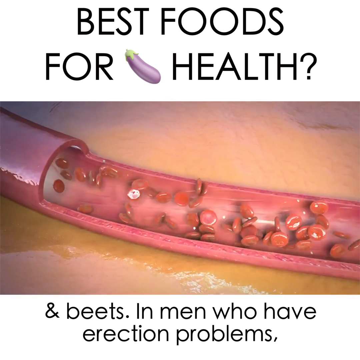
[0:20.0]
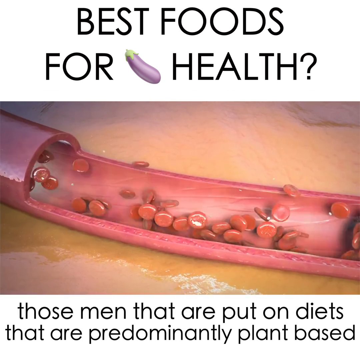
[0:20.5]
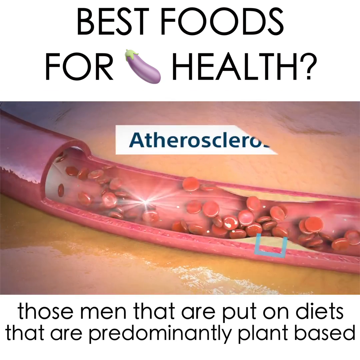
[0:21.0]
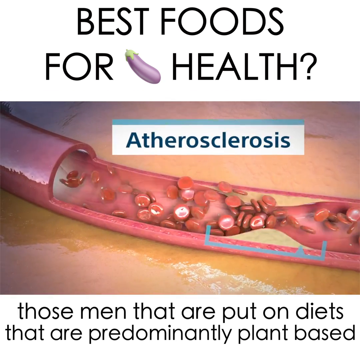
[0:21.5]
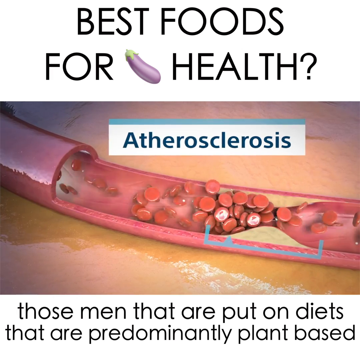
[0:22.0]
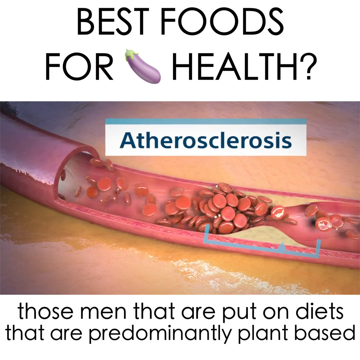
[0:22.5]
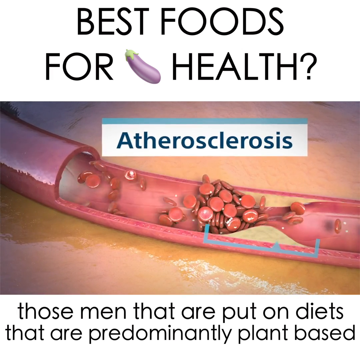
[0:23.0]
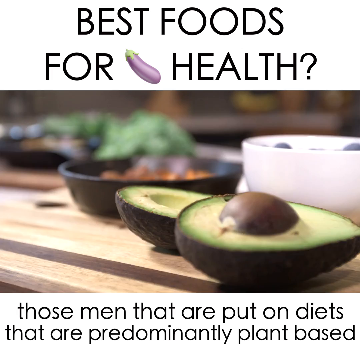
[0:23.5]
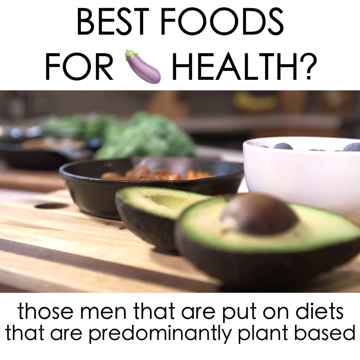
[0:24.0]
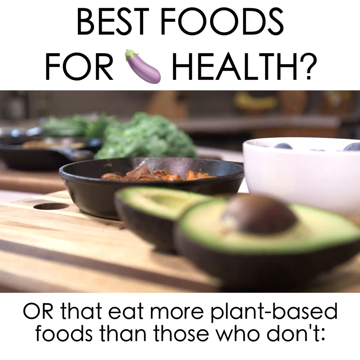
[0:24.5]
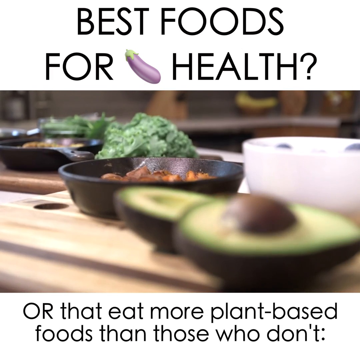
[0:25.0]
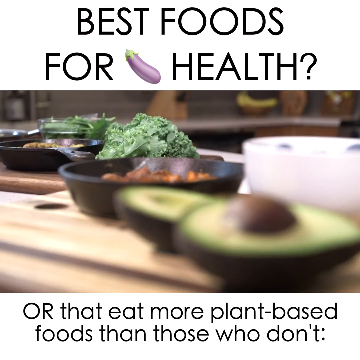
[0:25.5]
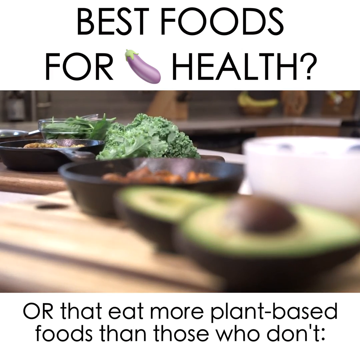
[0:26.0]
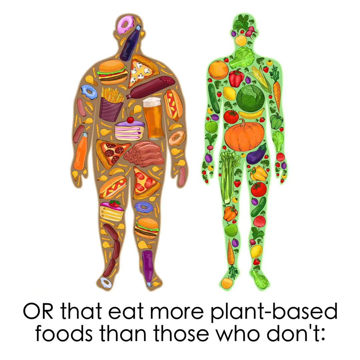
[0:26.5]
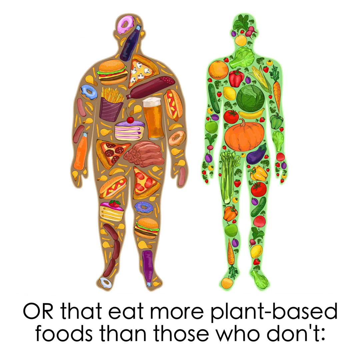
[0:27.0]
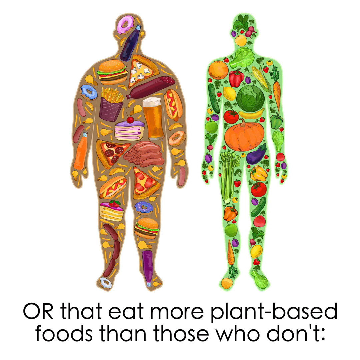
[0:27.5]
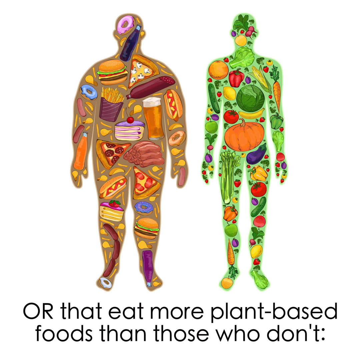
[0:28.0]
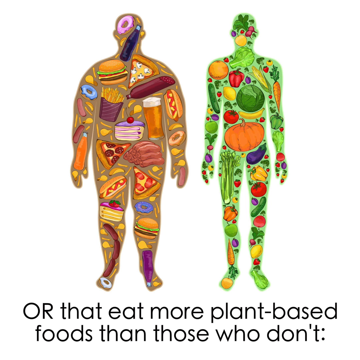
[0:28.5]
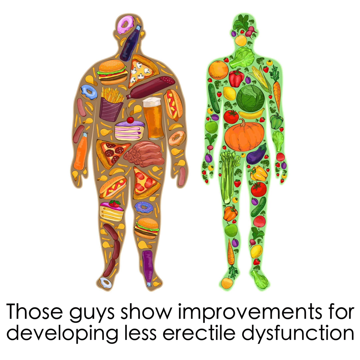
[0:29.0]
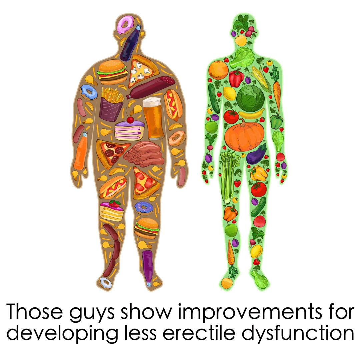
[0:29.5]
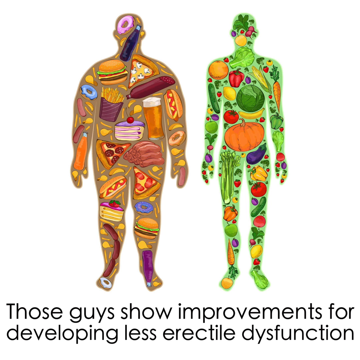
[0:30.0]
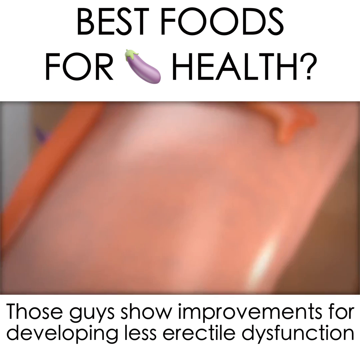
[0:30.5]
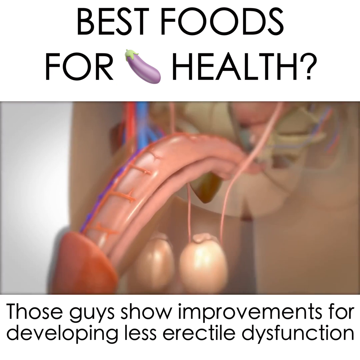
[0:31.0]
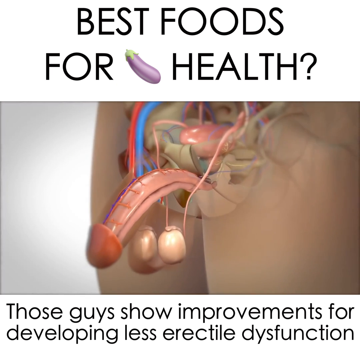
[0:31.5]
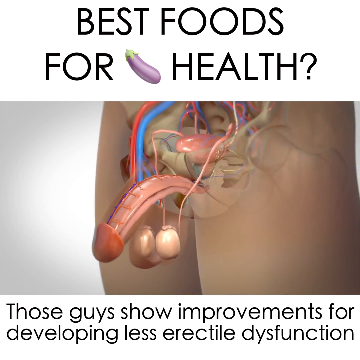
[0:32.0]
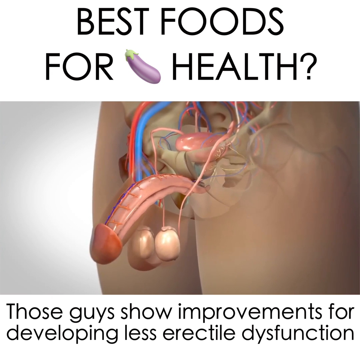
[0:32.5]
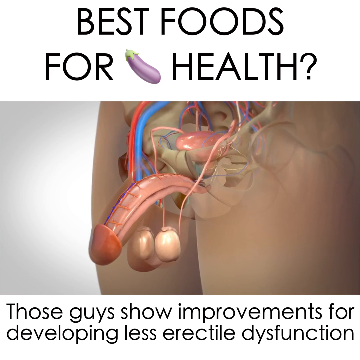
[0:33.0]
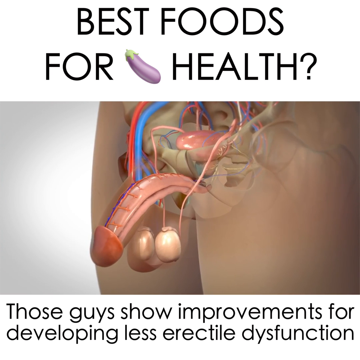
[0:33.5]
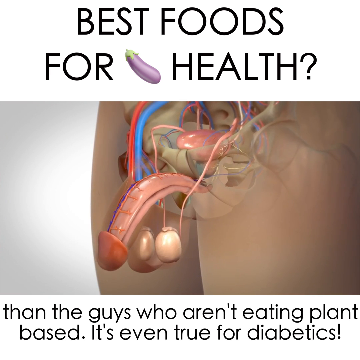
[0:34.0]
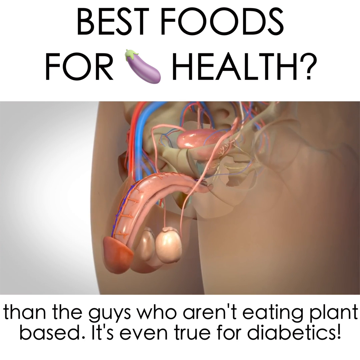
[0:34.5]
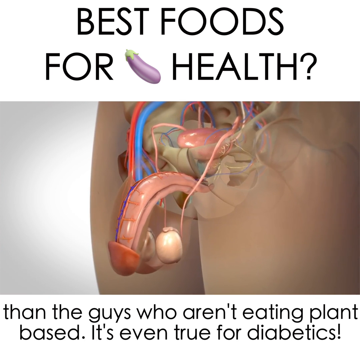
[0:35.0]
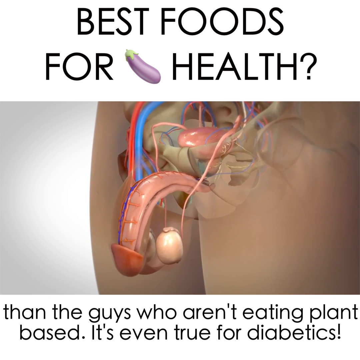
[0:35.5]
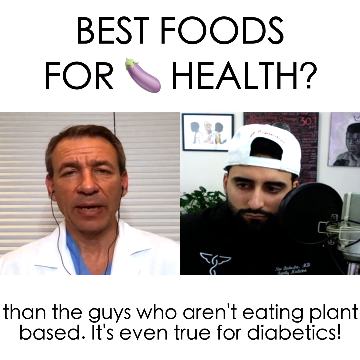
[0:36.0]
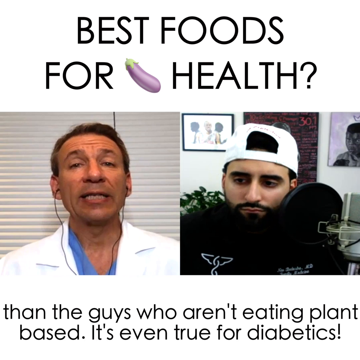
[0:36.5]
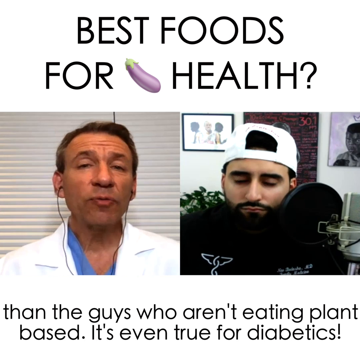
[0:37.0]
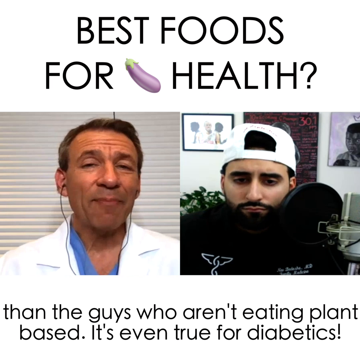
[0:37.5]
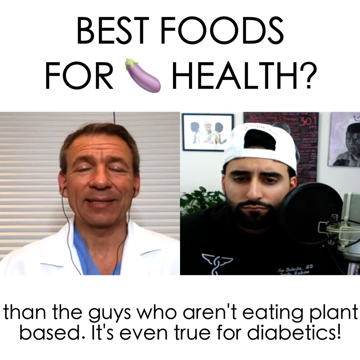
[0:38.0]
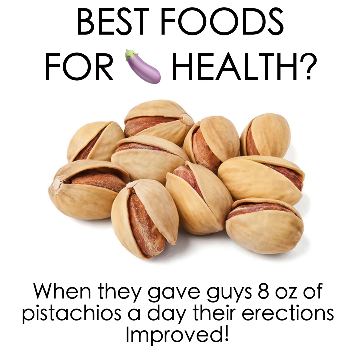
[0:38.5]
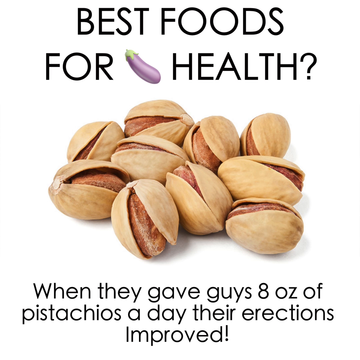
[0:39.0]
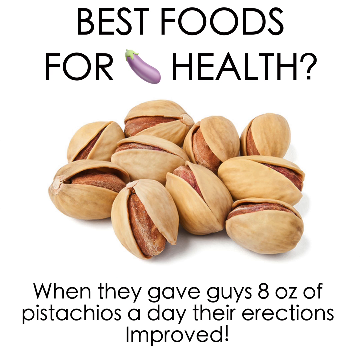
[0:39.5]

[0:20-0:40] Another animation shows something happening inside a human body: a red tube cut in half lengthways for illustrative purposes, with red flat discs floating very quickly from left to right through it. A white rectangular box appears at the top right of the screen with the word "Arthrosclerosis" in blue text. Across the top, a white band carries black block-letter text reading "best foods for health", with an emoji of an aubergine after the word "for". Across the bottom, another white band carries black lowercase text reading "those men that are put on diets that are predominantly plant-based". In the next shot, with the same text, there is a close-up of two avocado halves facing upward on a wooden board. Behind them, to the right, is a white bowl containing something that looks like blueberries, and to the left a flat black bowl containing something orange. Blurry shapes of leafy green vegetables are in the background, and everything is sitting on a wooden board or tabletop. The bottom text changes to "or that eat more plant-based foods than those who don't". Next is a diagram of two men standing side by side, shown only as outlines or silhouettes. The man on the left is overweight and the man on the right is slim, and each is filled with illustrations of food: the man on the left with unhealthy foods like donuts, burgers, french fries, pizza, beer and cake, and the man on the right with healthy foods like pumpkin, capsicum, aubergine, tomatoes, zucchini, carrots and cabbage. The bottom text changes to "those guys show improvements for developing less erectile dysfunction". The image is replaced by another animated diagram of a penis with an x-ray view of the inner workings of the male reproductive system; the camera lingers briefly on this animation, which seems to depict a male erection failing. The video returns to the podcast or YouTube video, with two men side by side, each in his own office, speaking into a microphone. This time the doctor on the left is speaking and the man on the right is listening and nodding. In the next shot the same heading, "best foods for health" with an aubergine emoji after "for", is across the top, the bottom text reads "when they gave guys 8 ounces of pistachios a day their erections improved", and there is a photo of 8 or 9 pistachios.